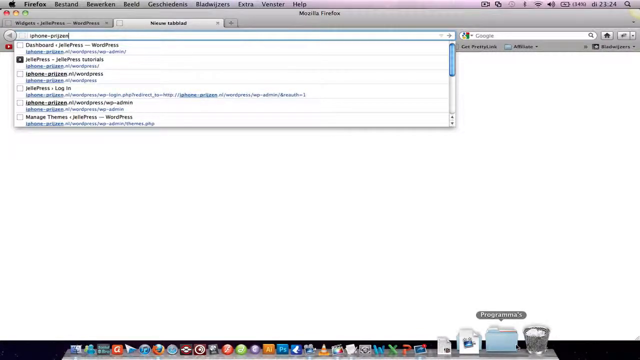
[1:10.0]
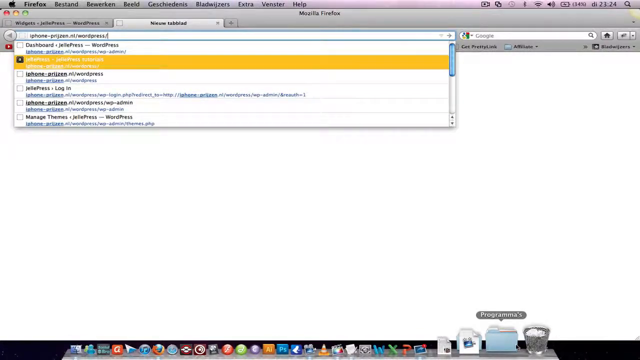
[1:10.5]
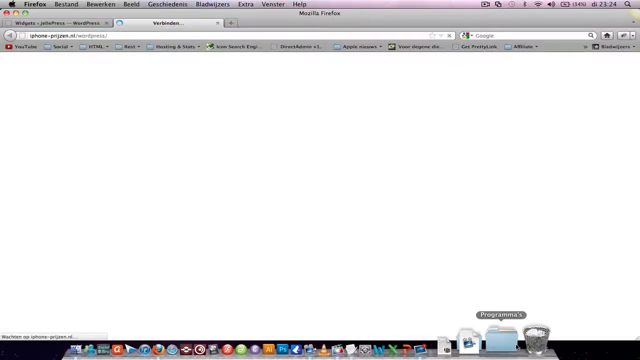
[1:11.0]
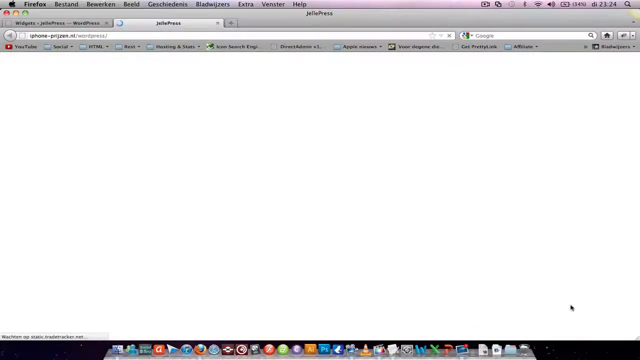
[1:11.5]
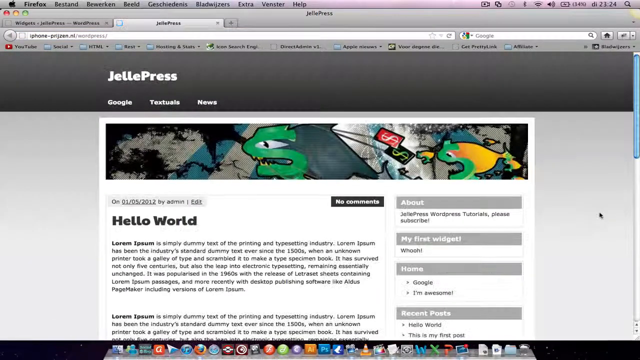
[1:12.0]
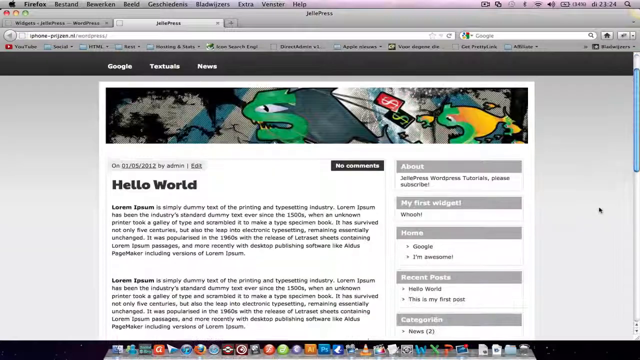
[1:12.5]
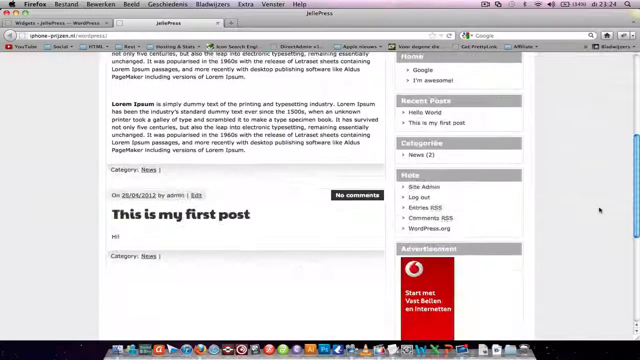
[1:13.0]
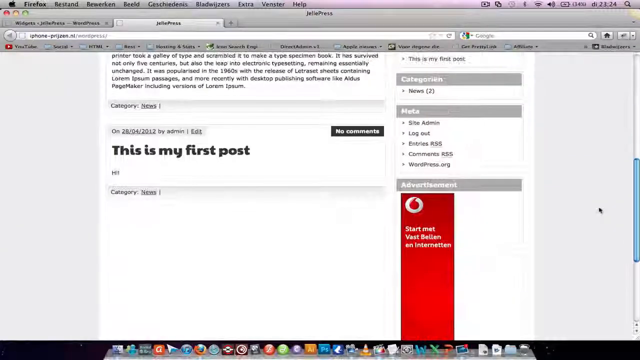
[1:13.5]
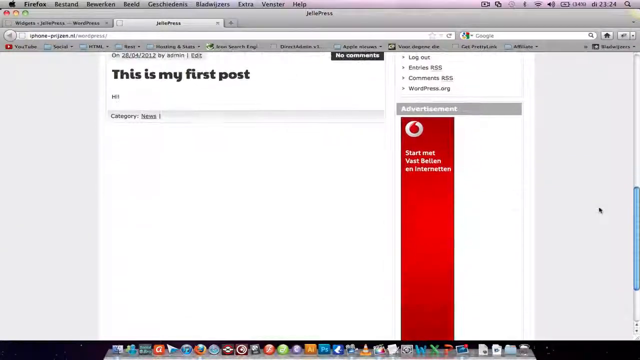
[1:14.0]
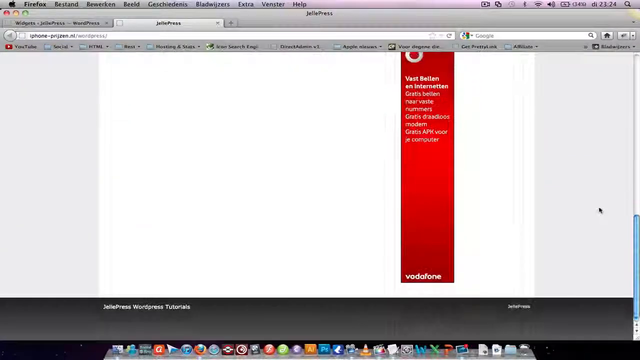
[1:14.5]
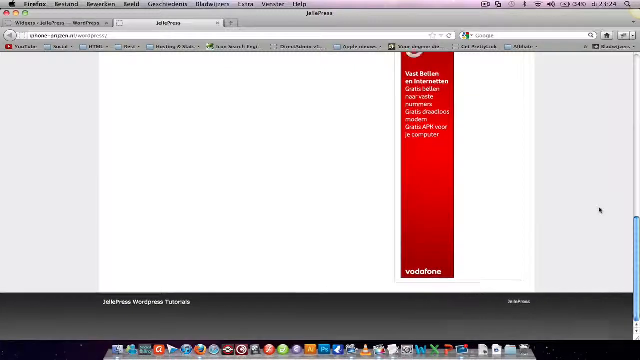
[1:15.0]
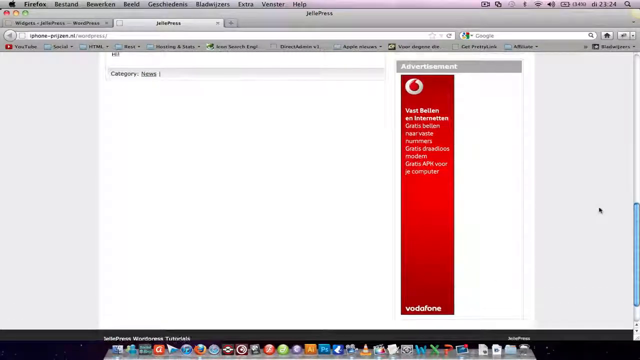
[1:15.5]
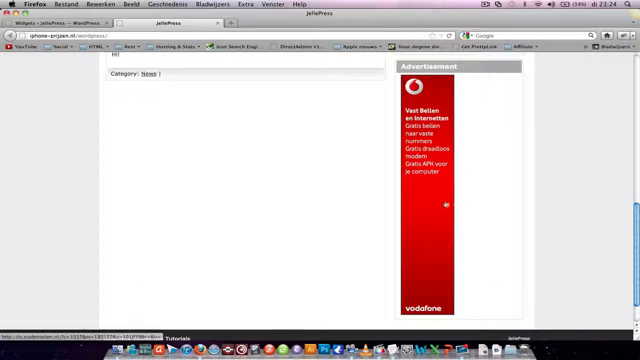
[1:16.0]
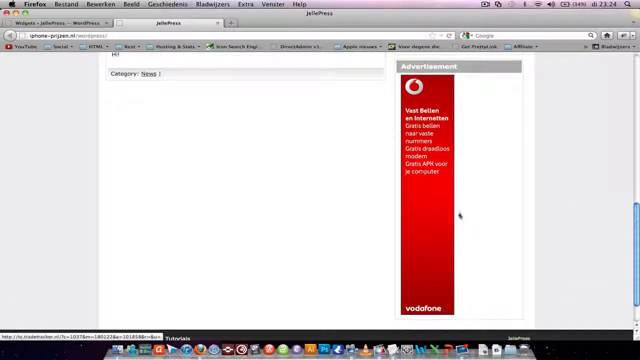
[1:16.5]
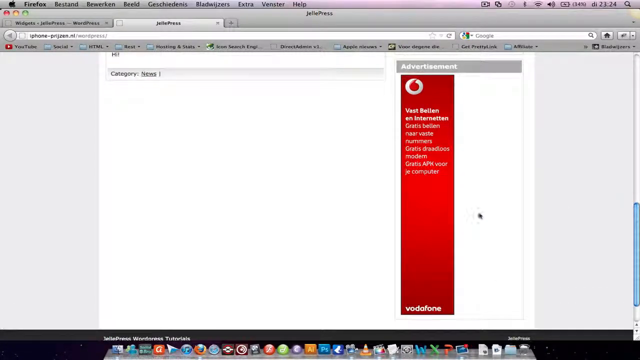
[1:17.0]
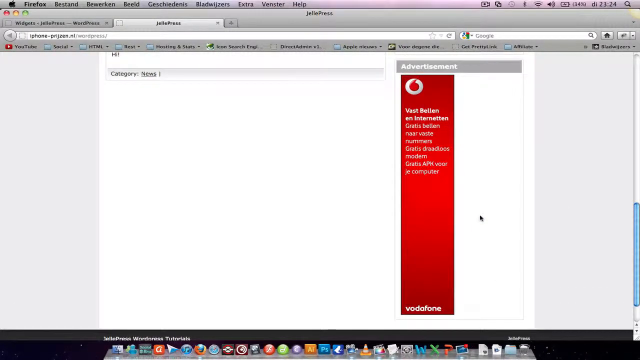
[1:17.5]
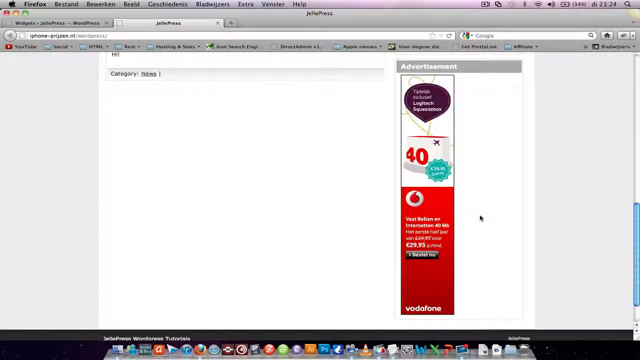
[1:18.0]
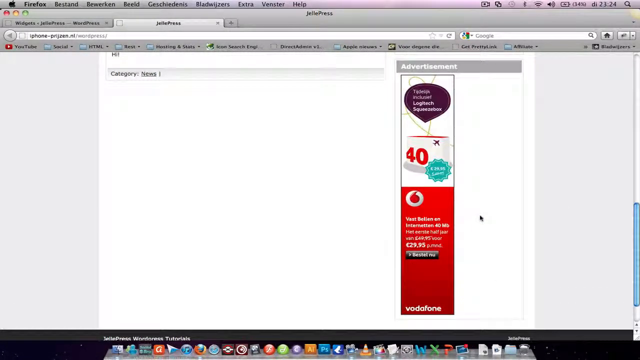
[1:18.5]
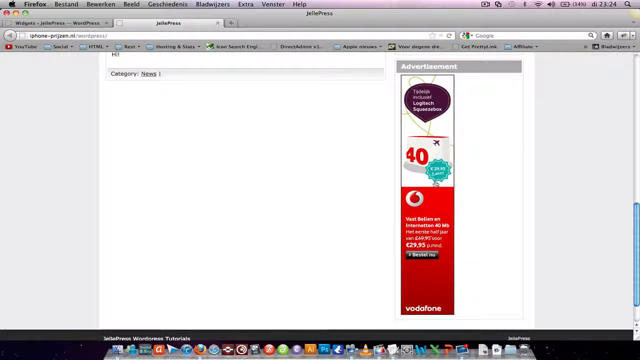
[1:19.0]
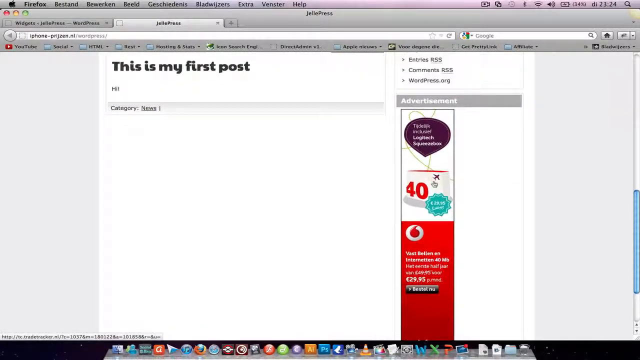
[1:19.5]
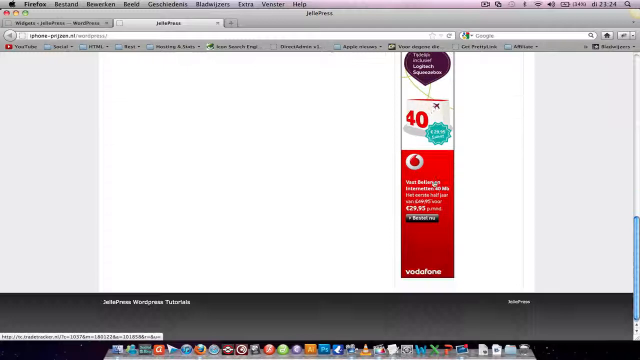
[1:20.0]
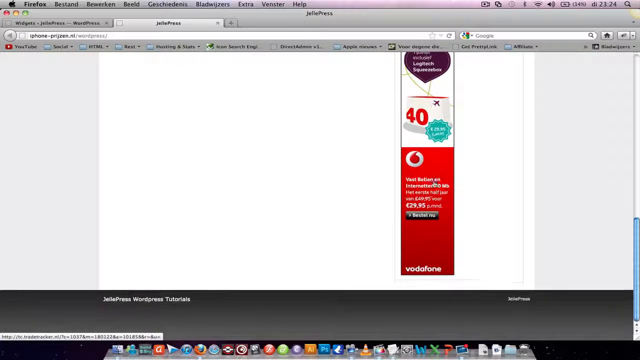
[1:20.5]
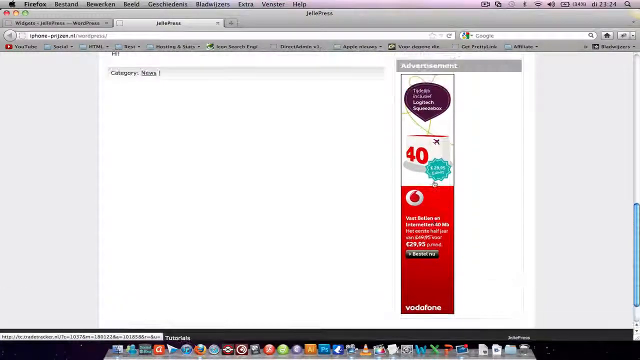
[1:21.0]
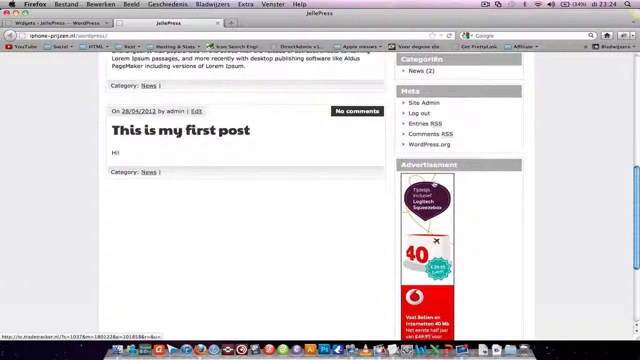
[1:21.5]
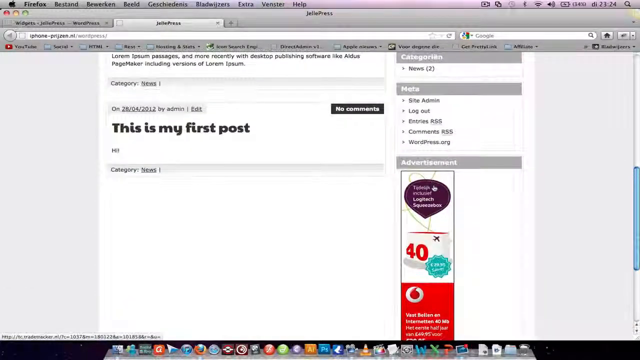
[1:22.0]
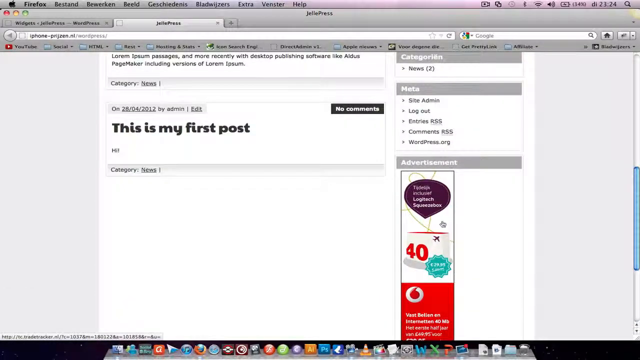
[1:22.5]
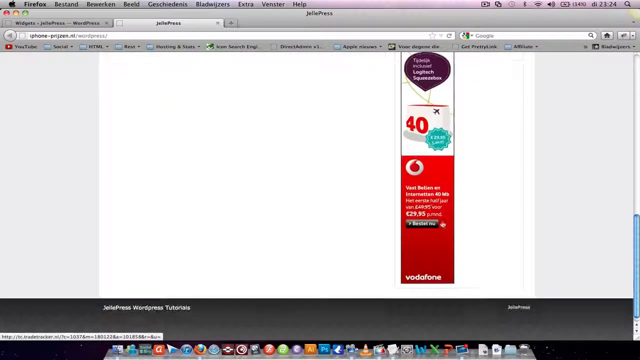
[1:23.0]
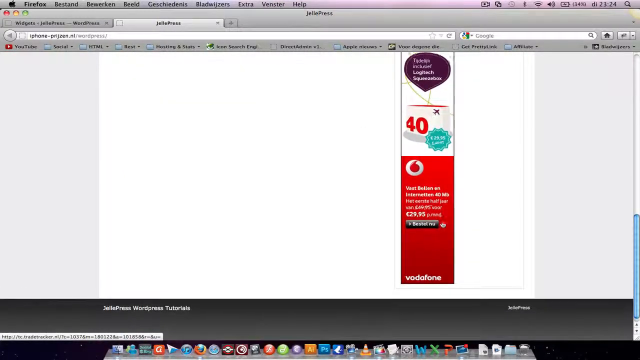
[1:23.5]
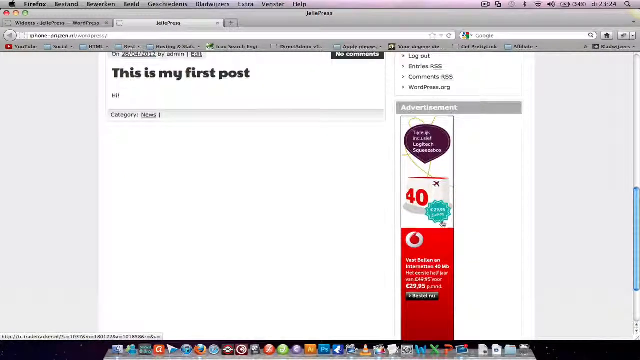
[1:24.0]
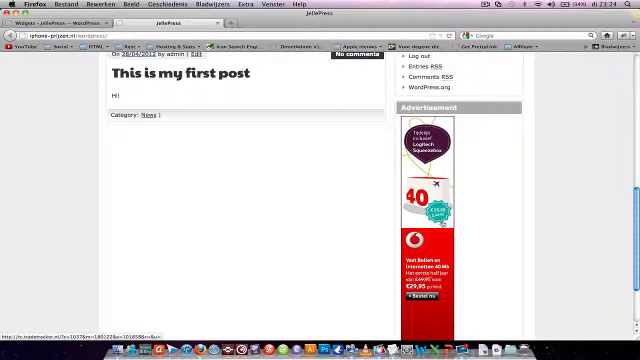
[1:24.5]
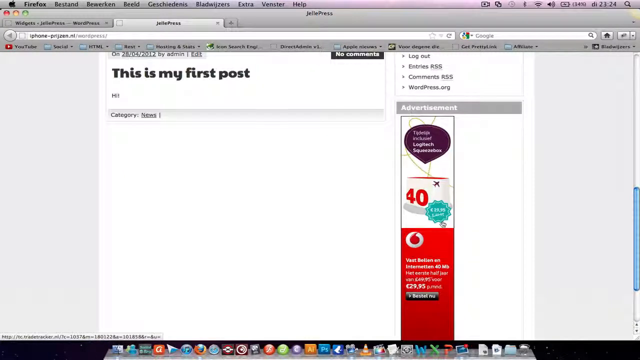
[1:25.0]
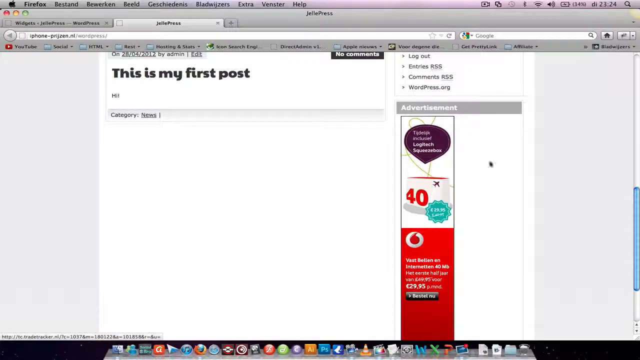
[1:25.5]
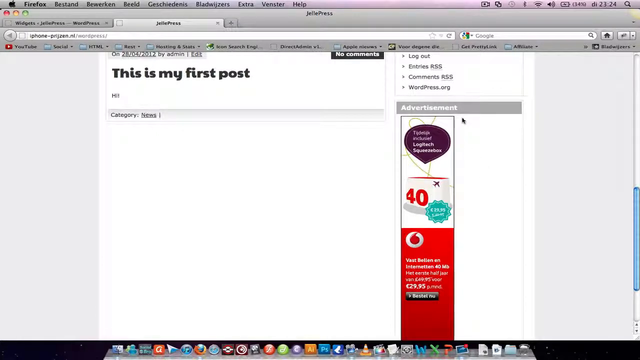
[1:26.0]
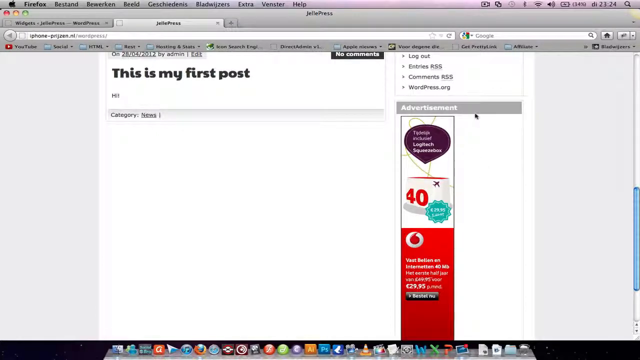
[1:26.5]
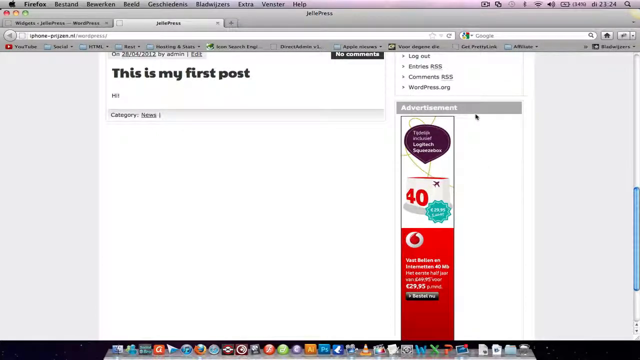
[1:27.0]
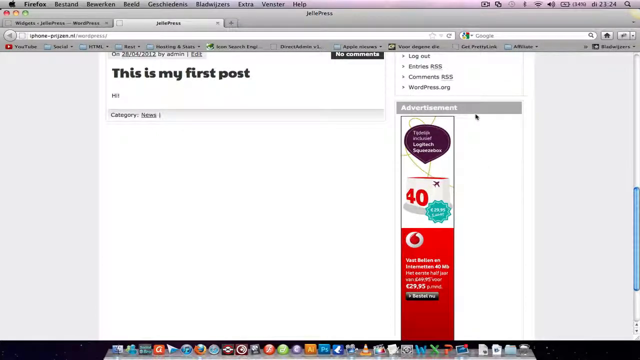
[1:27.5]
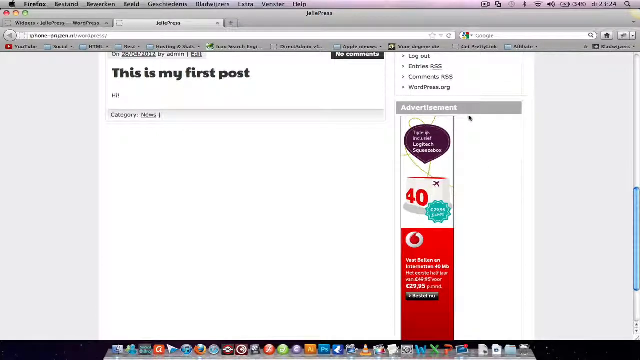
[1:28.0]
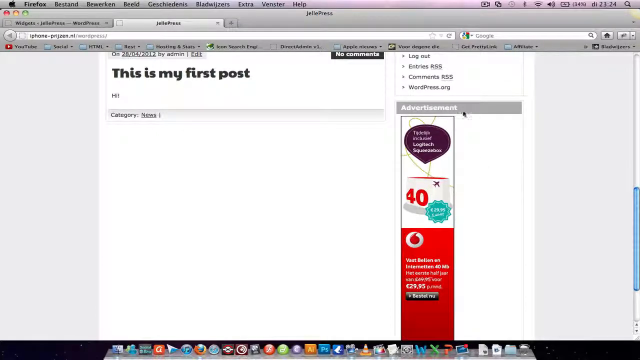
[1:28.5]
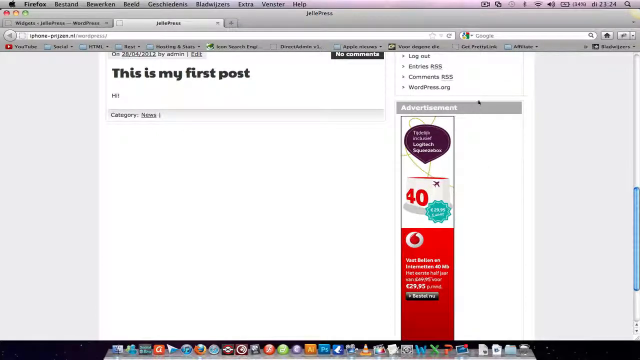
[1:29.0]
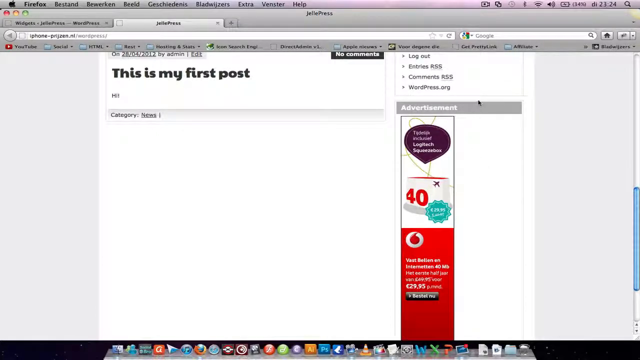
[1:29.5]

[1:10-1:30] In a new tab, after typing, the person goes to "iphoneprijzen.nl/wordpress", and a web page titled Jelle Press appears, with the words Jelle Press on it. Below that, tabs including "google" and "news" are at the top of a gray square, which has a graphic of what looks like fish whose faces are partly made of a money symbol. Below that is a date line with "by admin / edit", then "hello world", then a paragraph beginning "Lorem ipsum is simply a dummy text of the", which goes over the history of that text; the same paragraph then appears again. Further down the page it says "this is my first post" and "hi".